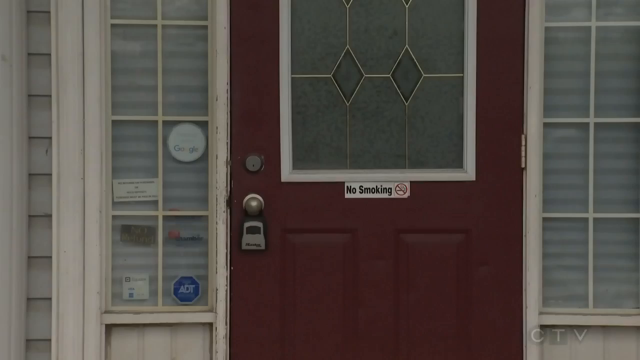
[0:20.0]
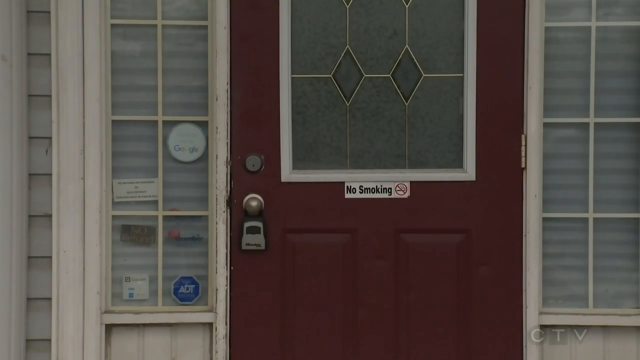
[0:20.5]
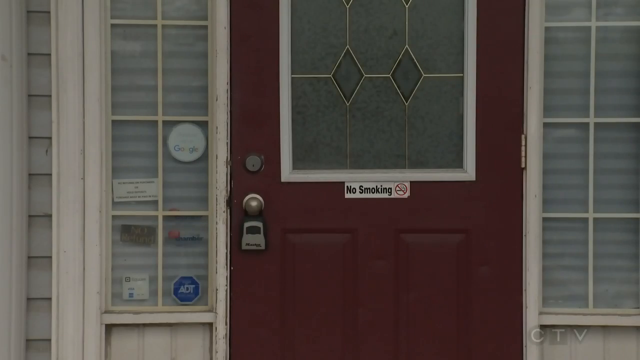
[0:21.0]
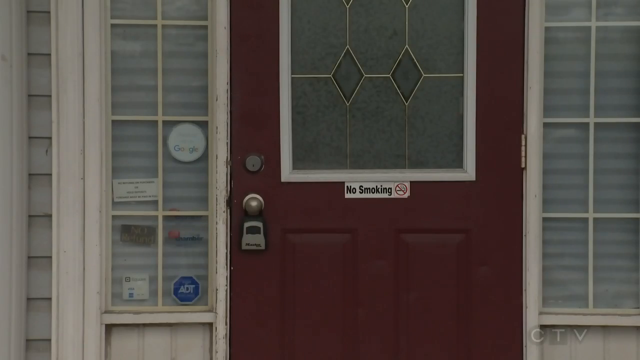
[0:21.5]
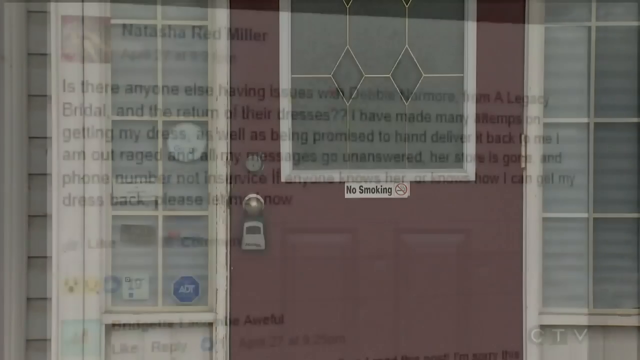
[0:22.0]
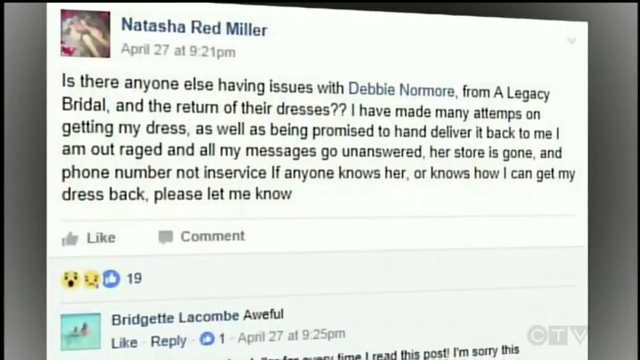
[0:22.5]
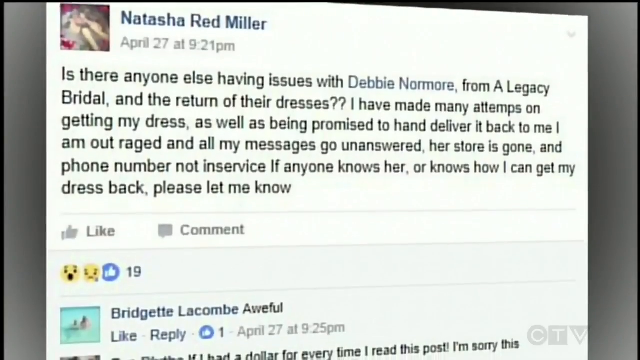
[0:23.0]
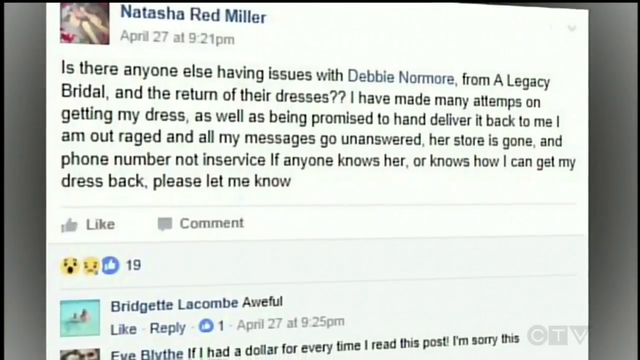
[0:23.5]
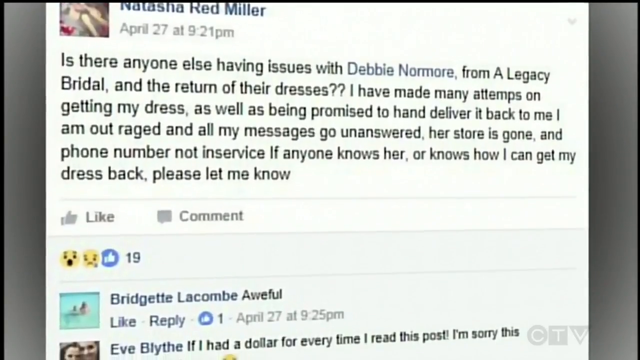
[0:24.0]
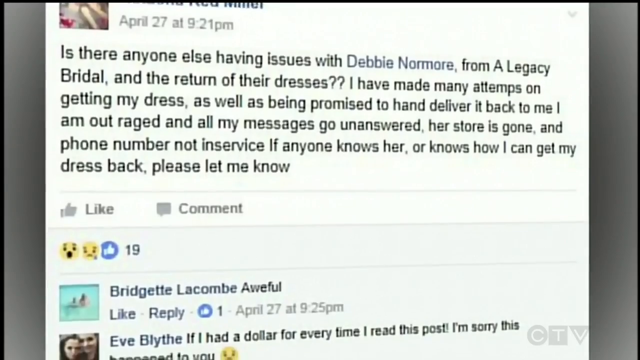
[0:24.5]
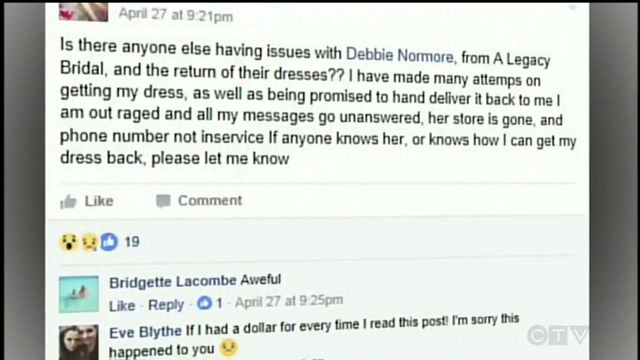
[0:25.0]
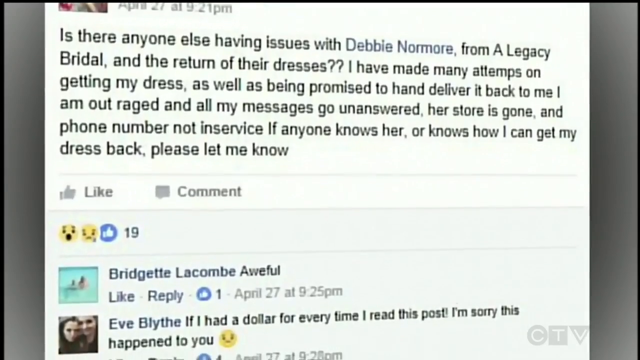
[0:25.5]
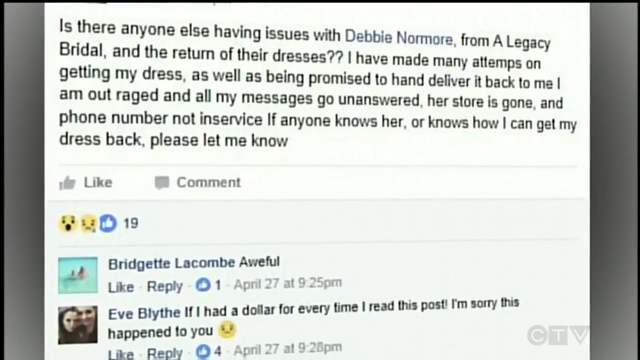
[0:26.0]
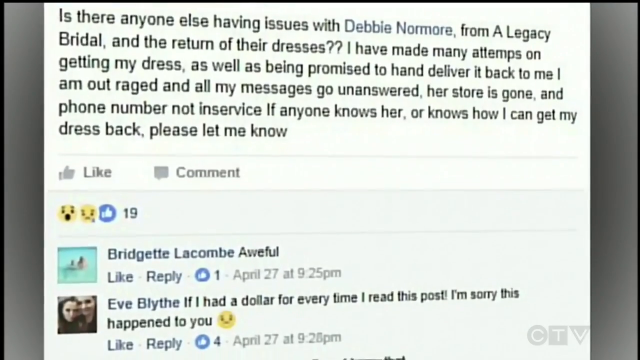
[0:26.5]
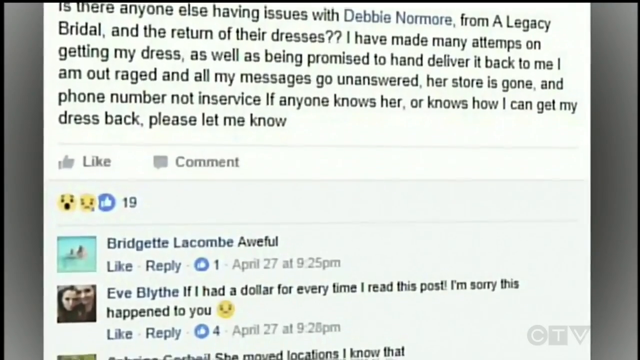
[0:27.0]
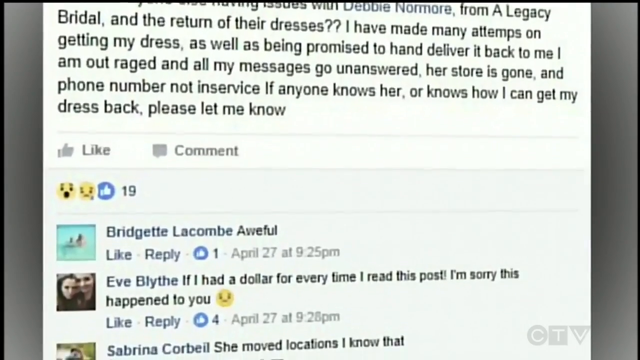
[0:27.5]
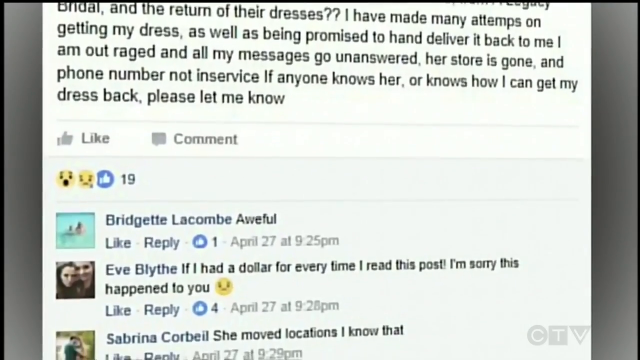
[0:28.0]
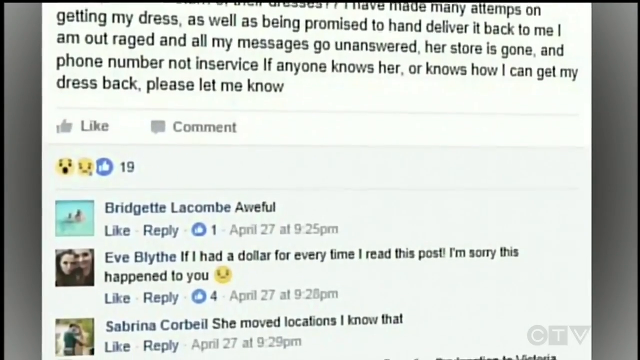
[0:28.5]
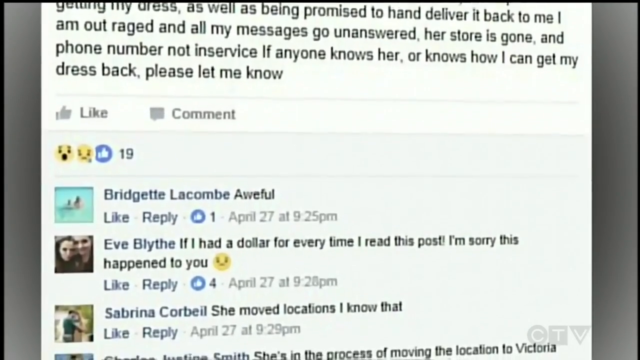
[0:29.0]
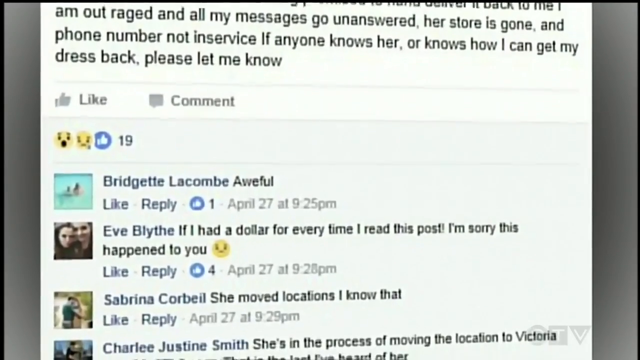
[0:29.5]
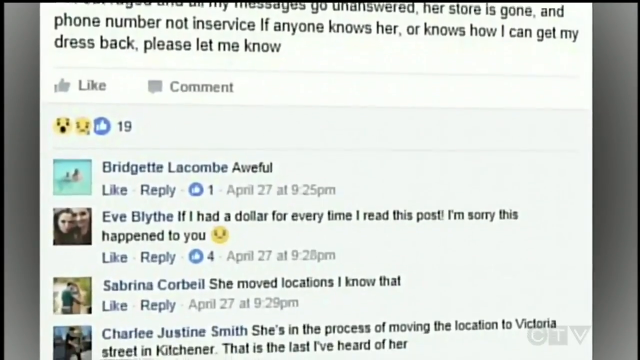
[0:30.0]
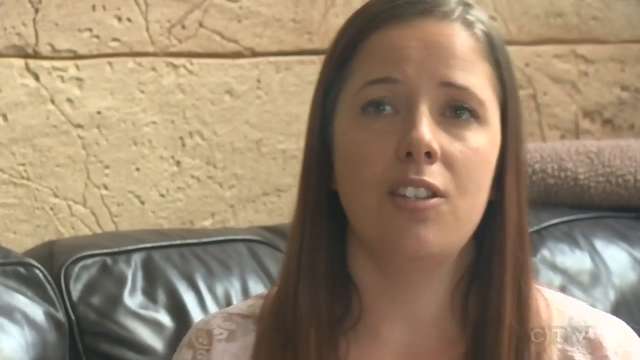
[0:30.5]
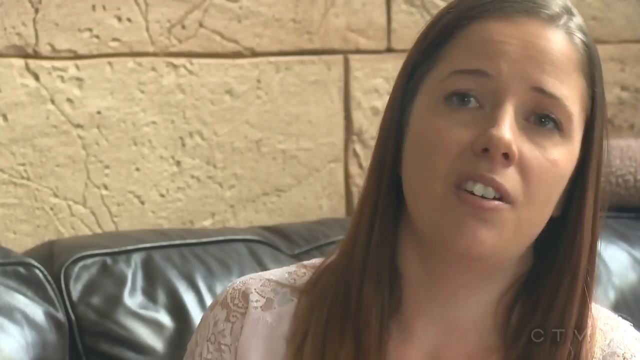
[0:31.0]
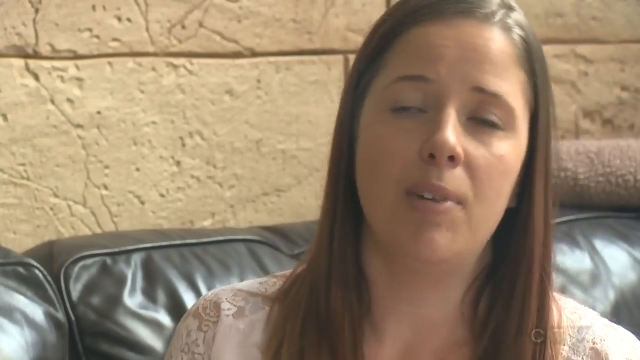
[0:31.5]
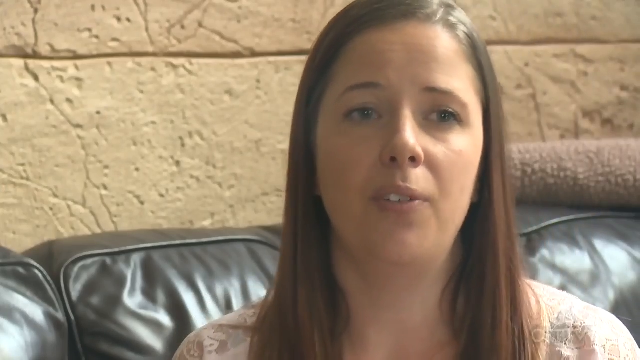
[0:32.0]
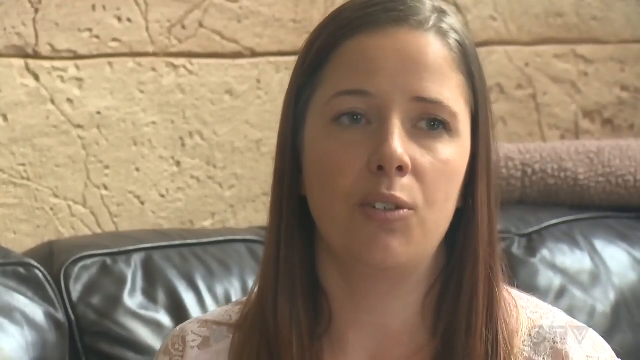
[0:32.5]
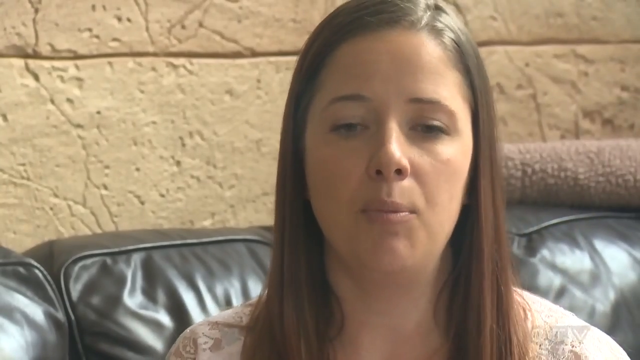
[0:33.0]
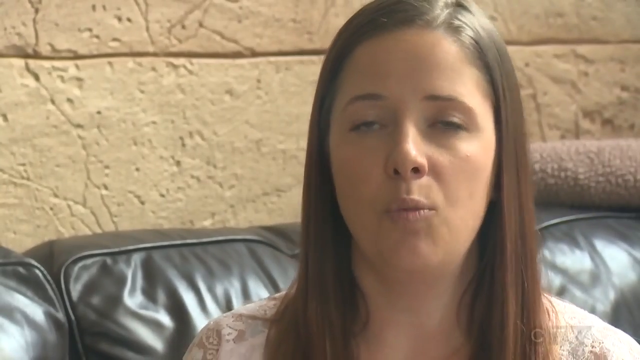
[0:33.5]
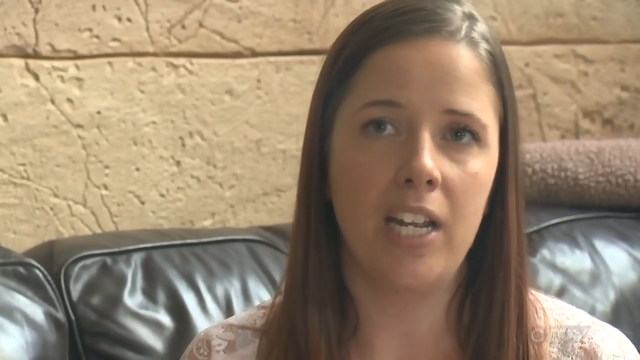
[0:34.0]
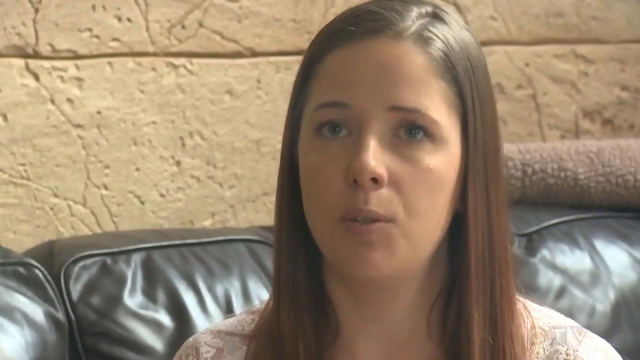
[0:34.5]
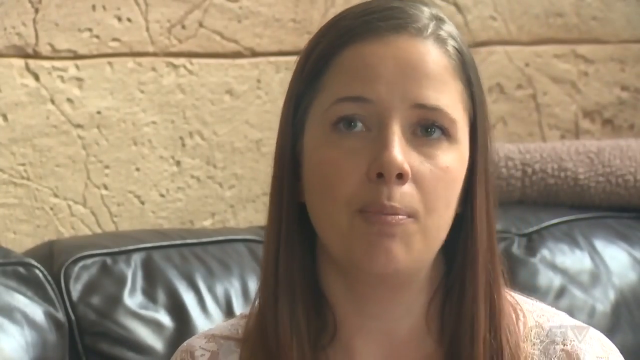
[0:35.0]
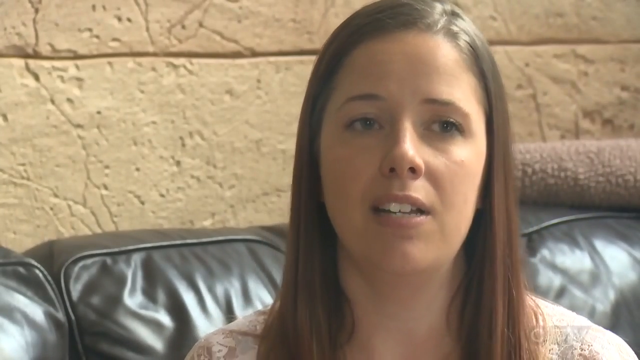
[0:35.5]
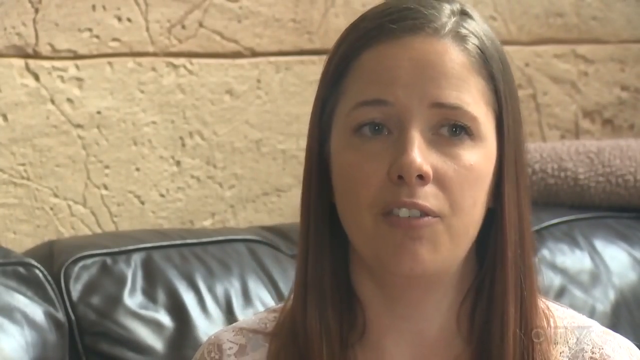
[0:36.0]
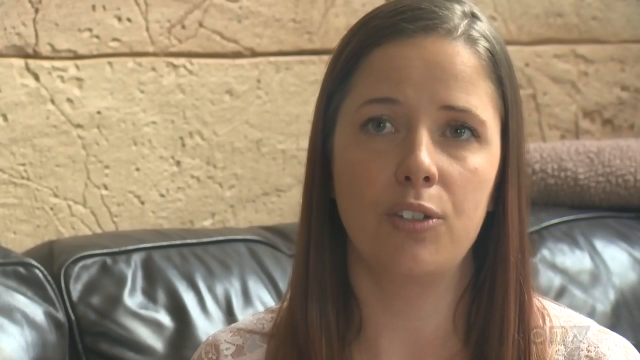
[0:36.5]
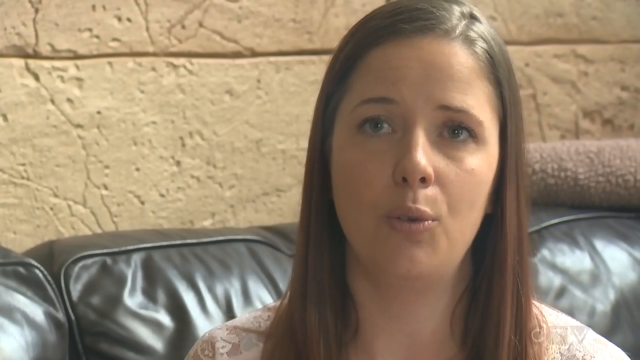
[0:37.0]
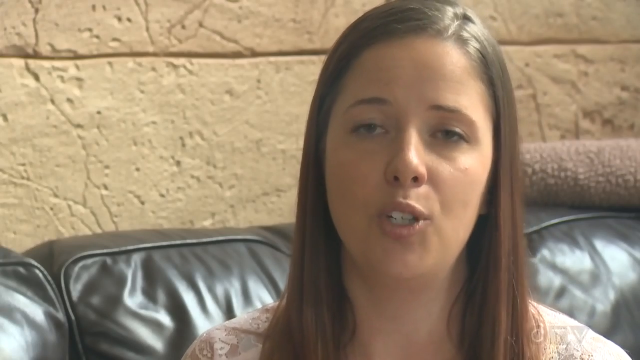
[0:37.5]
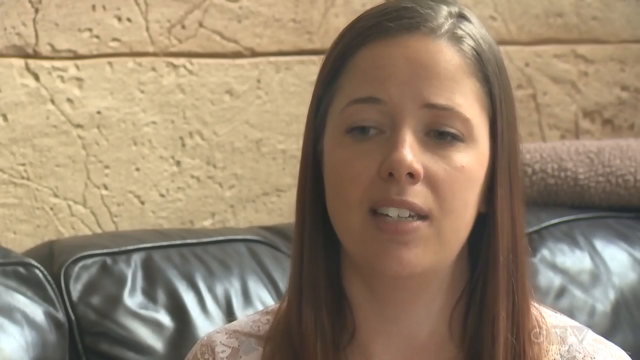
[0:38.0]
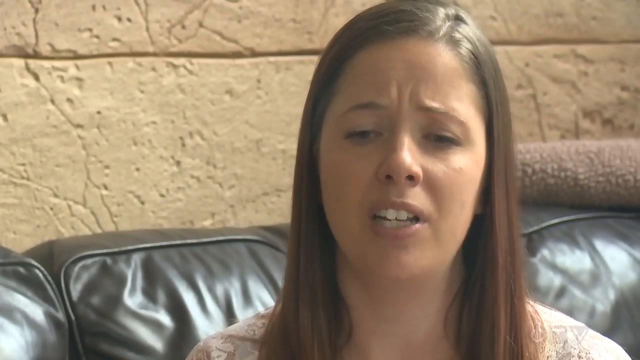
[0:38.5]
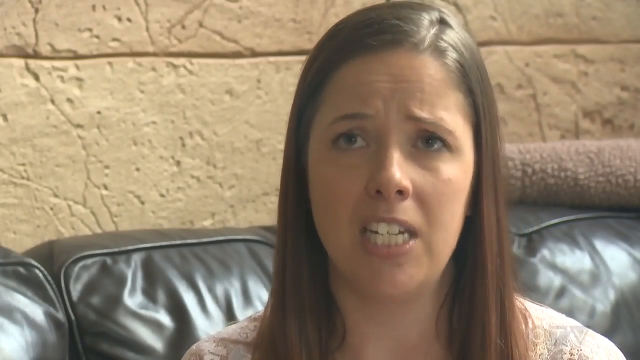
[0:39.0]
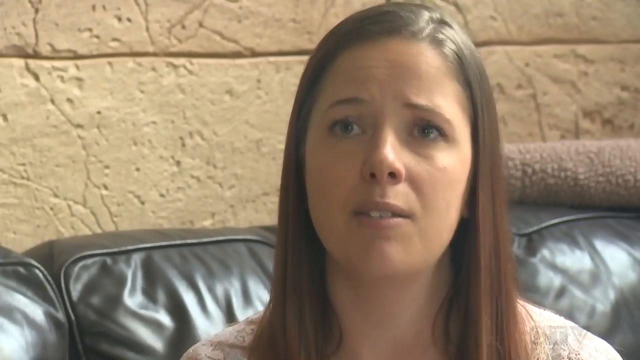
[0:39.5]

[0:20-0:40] The video zooms in on a red doorway with a no smoking sign on it. A Facebook post from Natasha Red Miller, posted April 27th at 9.21pm, appears. It reads: "Is there anyone else having issues with Debbie Namur from a legacy bridal and the return of their dresses? I have made many attempts on getting my dress as well as being promised to hand deliver it back to me. I am outraged and all my messages go unanswered. Her store is gone and her phone number is not in service." It ends asking anyone who knows her or how the writer can get the dress back to "please let me know." The post has over 19 reactions, and a comment from Bridgette LaCombe says "awful." The view moves further down through comments from different people; one from Eve says she is not the first person to say that, and one woman has heard that they have moved locations. A woman who seems to be being interviewed then sits on a leather couch with a painted brick wall behind her. She has long straight brown hair, talks directly to the camera, and seems very upset and serious.